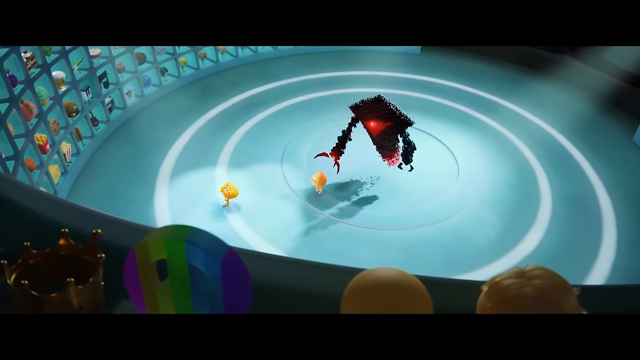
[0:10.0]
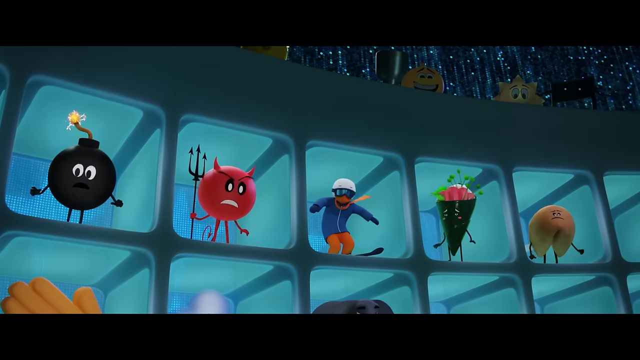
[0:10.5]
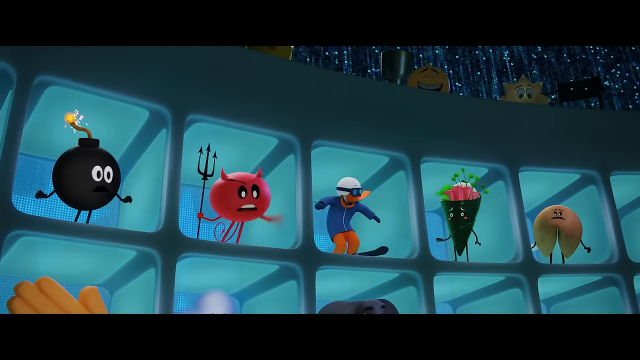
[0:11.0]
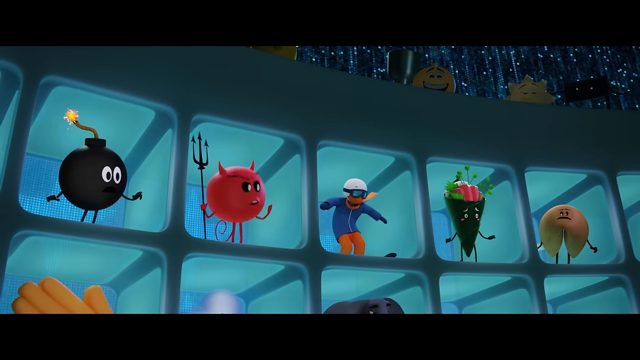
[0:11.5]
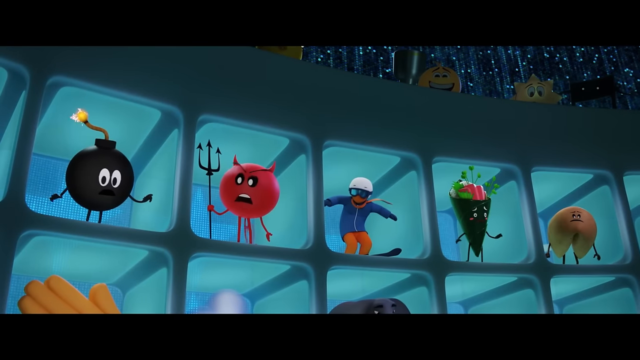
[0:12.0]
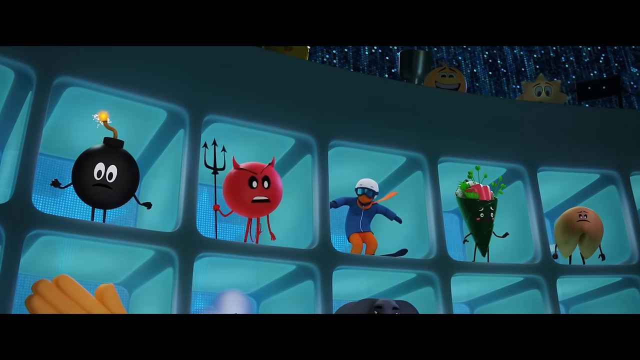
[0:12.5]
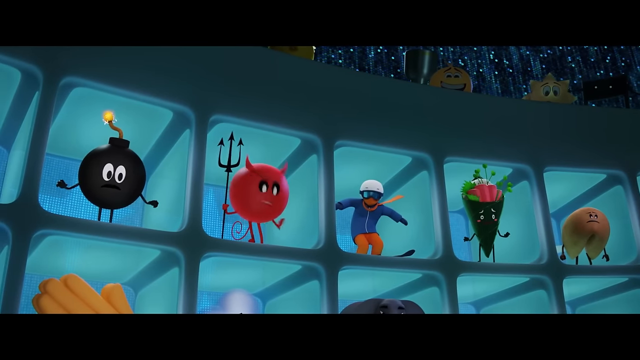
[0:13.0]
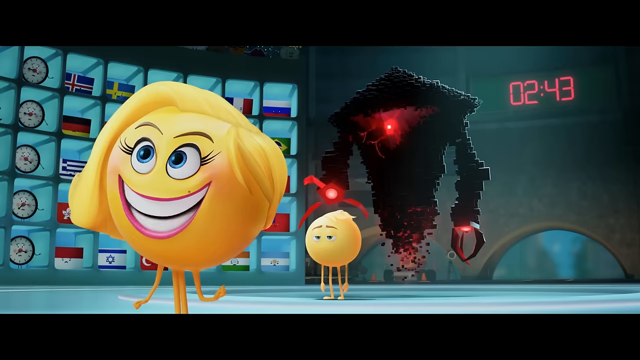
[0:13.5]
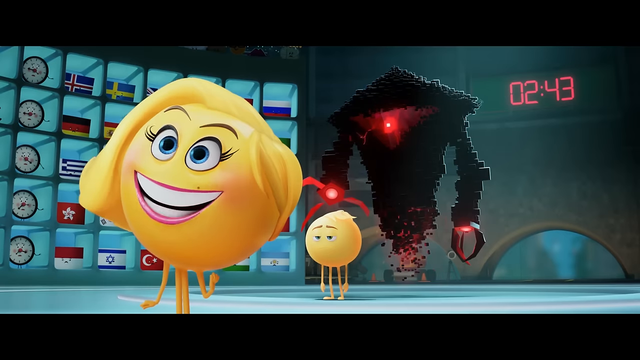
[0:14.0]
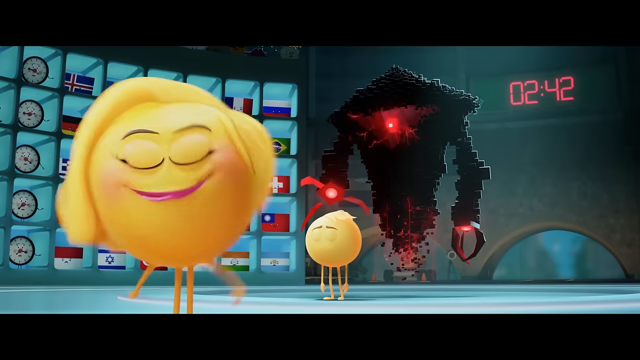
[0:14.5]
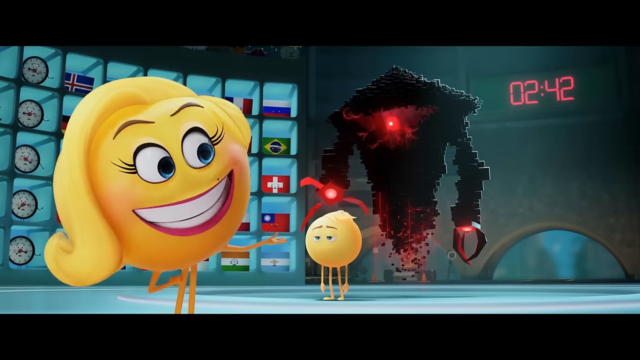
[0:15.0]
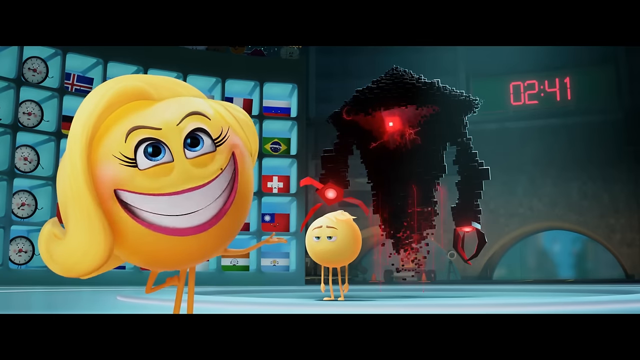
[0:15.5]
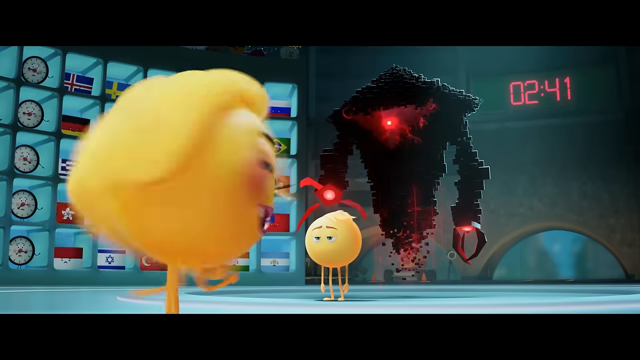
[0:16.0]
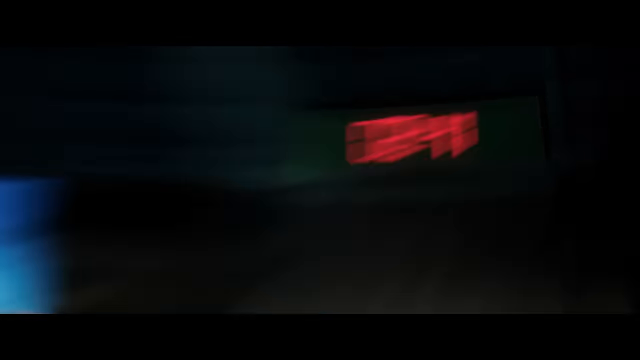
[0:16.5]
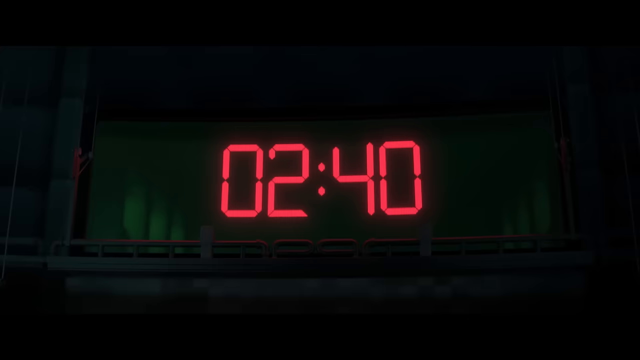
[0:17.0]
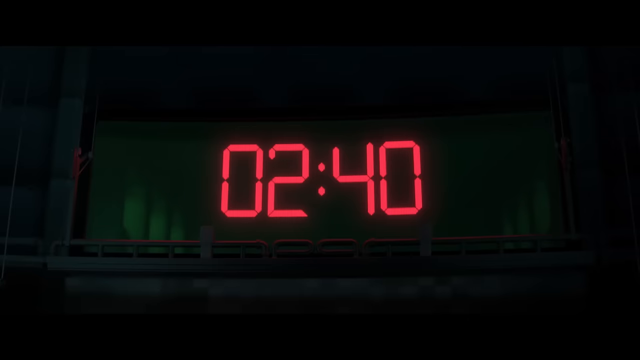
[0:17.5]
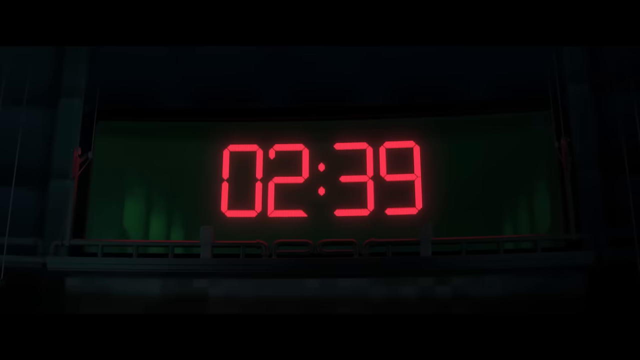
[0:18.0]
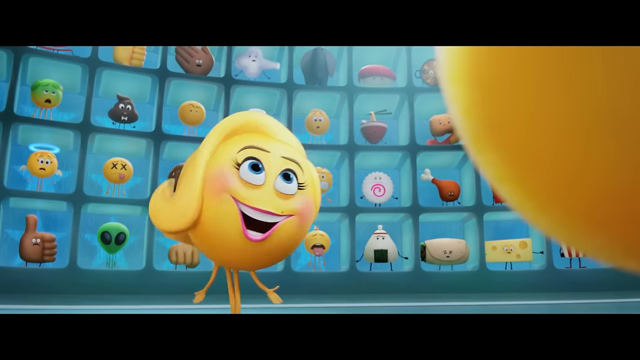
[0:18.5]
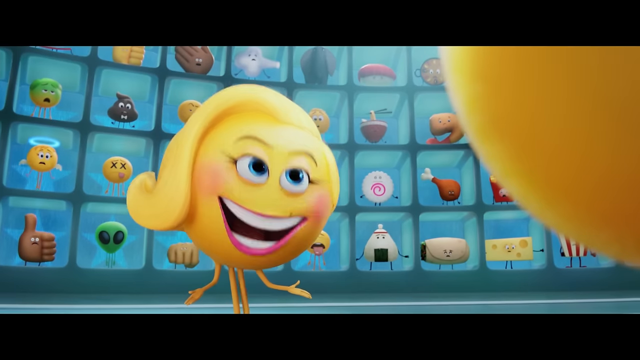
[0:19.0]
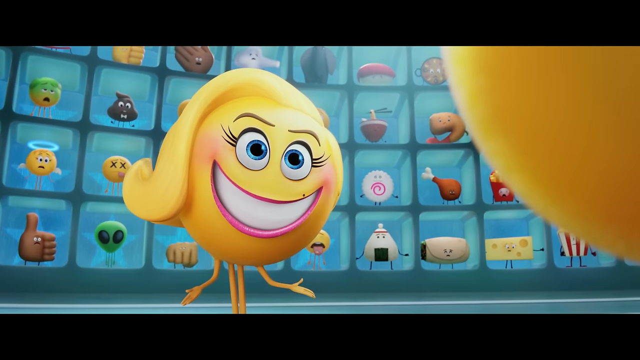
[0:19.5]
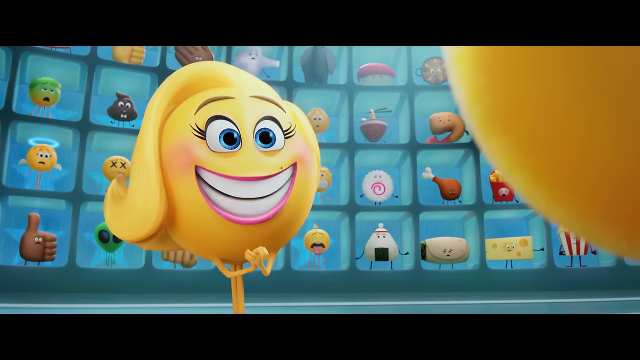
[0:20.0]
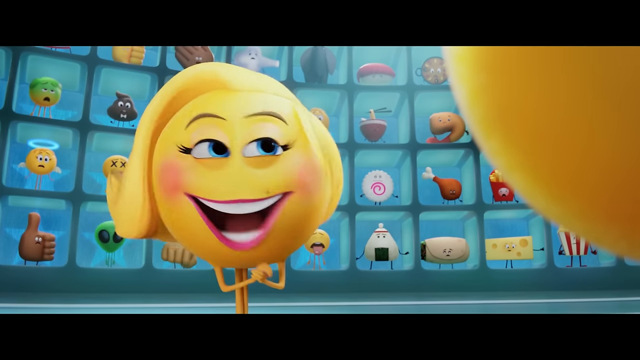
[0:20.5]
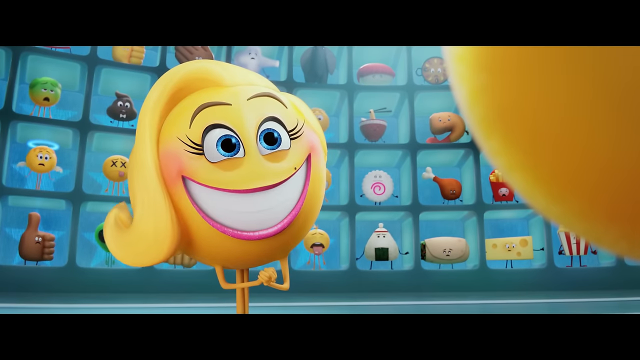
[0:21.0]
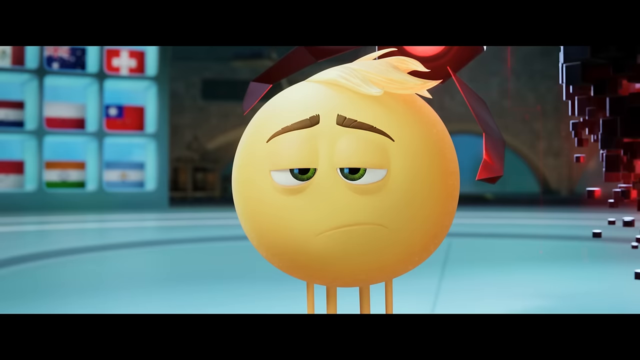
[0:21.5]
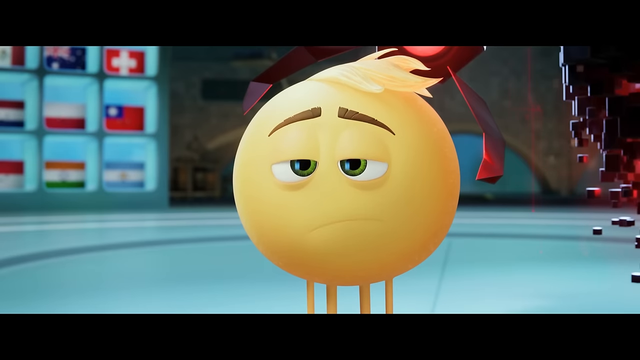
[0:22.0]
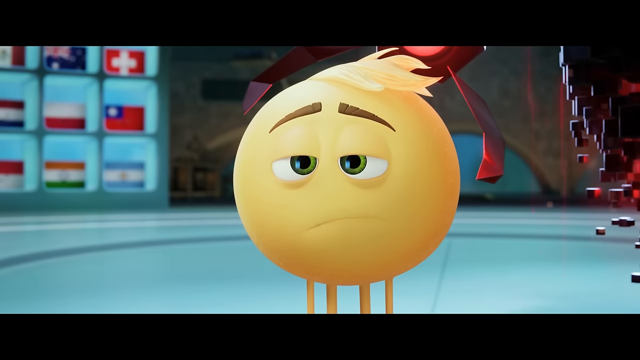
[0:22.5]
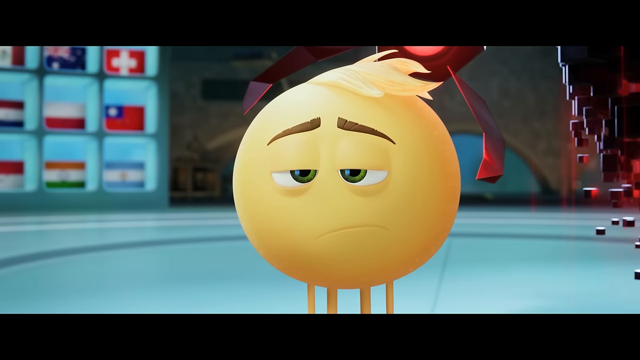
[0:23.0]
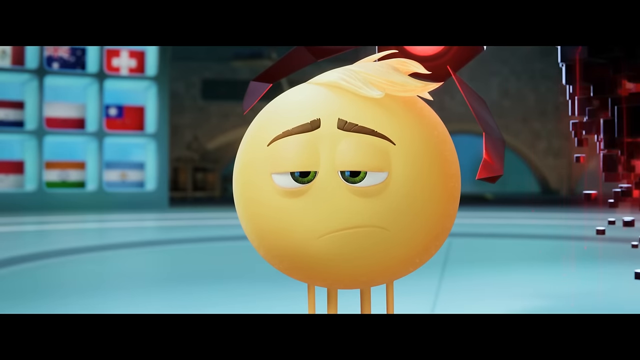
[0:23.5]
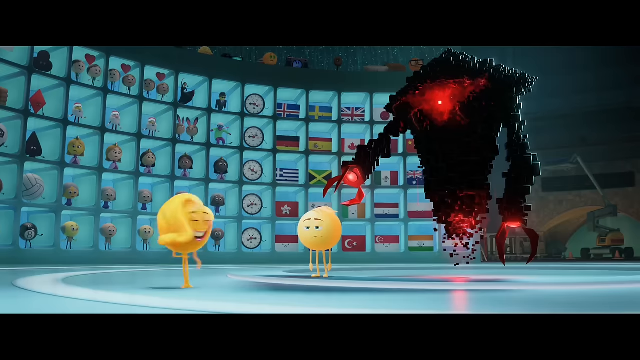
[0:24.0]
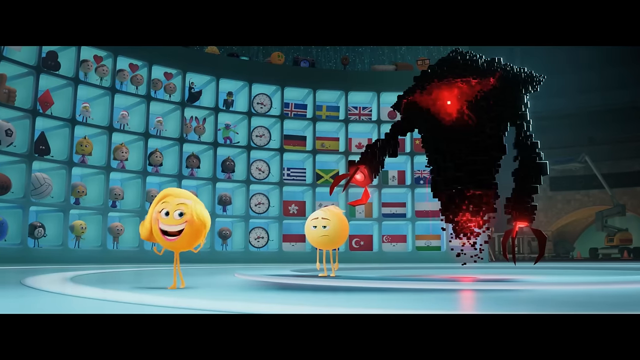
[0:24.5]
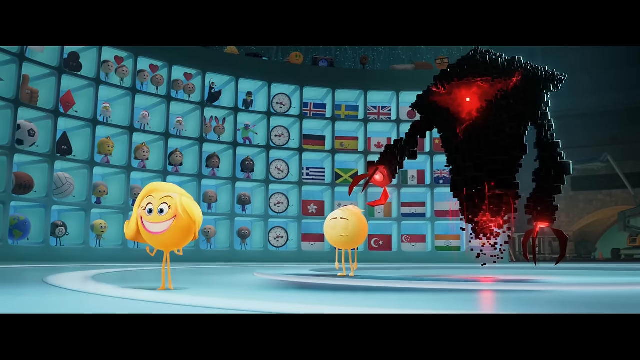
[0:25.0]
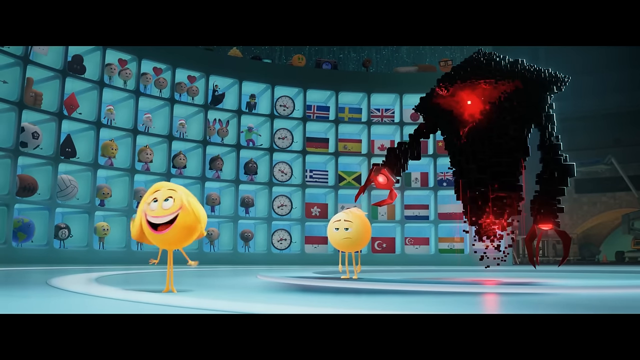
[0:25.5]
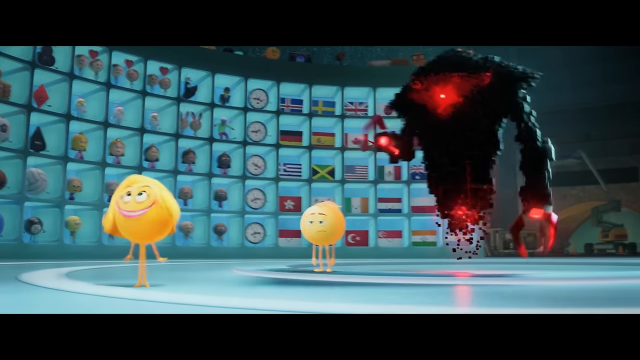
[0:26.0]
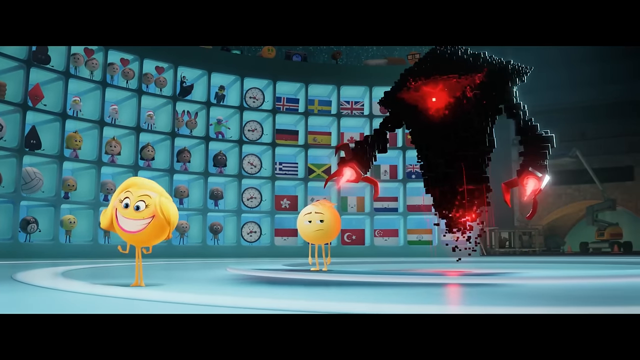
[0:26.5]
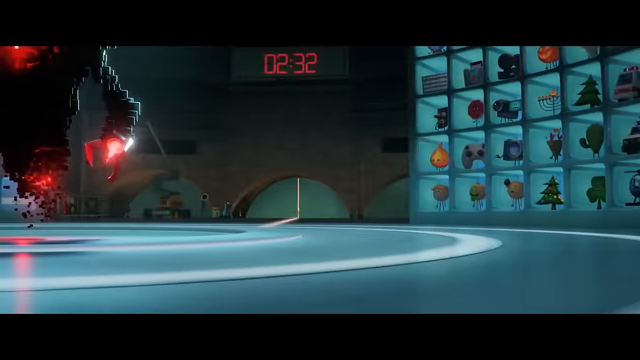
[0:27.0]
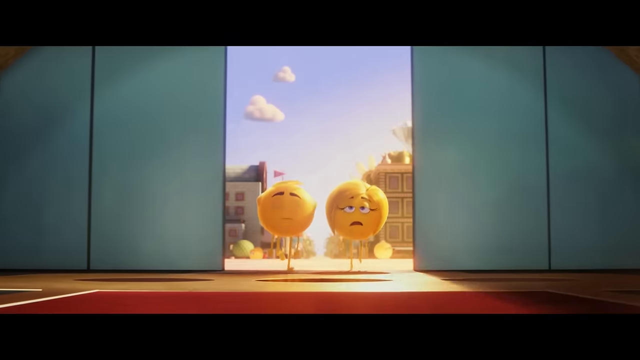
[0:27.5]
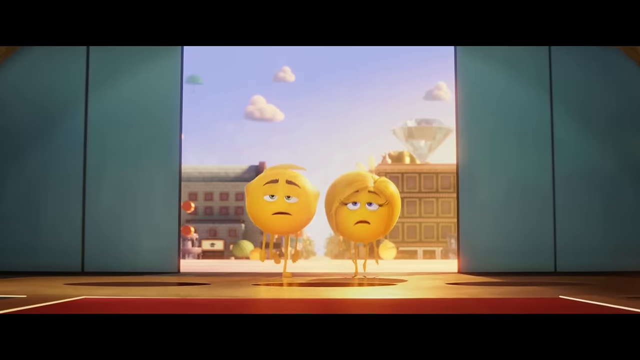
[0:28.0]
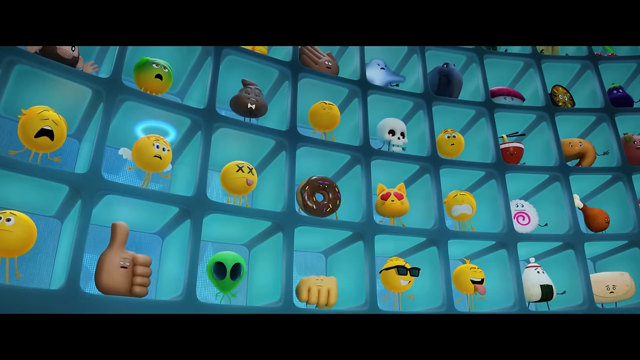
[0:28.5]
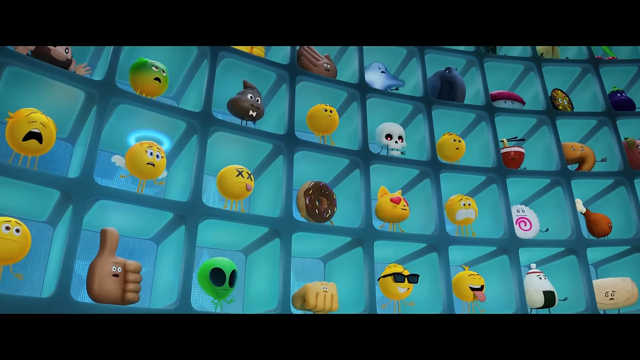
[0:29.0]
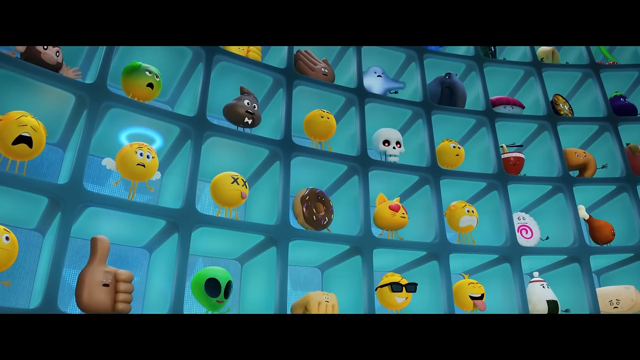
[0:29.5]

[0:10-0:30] Smiler and the other male emoji meet and talk. He is not smiling, while Smiler smiles here and there. The emojis in the locked chambers look curious about the situation. Among them is a black bomb emoji, which is curious; to its right is a devil emoji holding a fork, and to the right of that is a skateboarding person emoji. There are also an ice cream emoji and a tooth emoji. A timer on the wall counts down from 2 minutes 40 seconds. The locked chambers are cubes, with emojis placed side by side, one emoji per cube, including a basket, a thumbs up and an emoji with a halo. Two characters who appear to be a couple approach by the door.